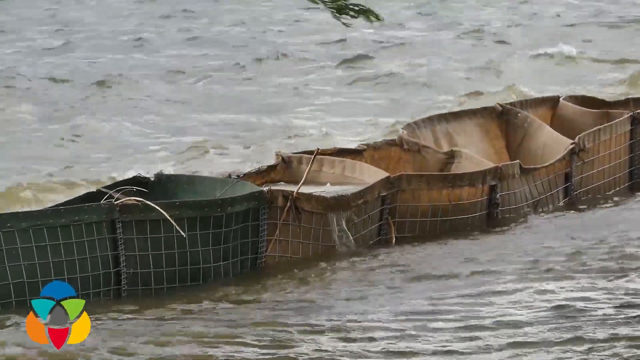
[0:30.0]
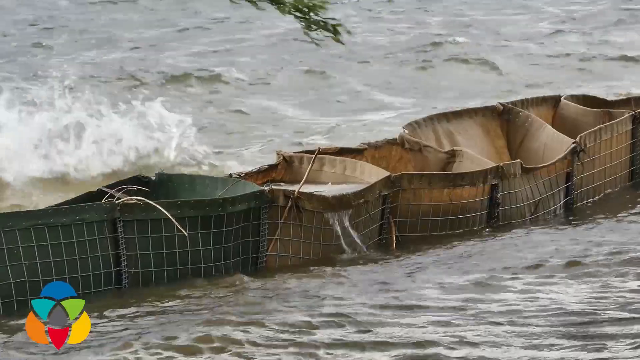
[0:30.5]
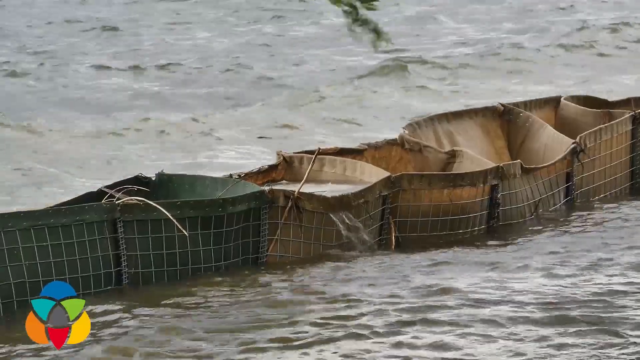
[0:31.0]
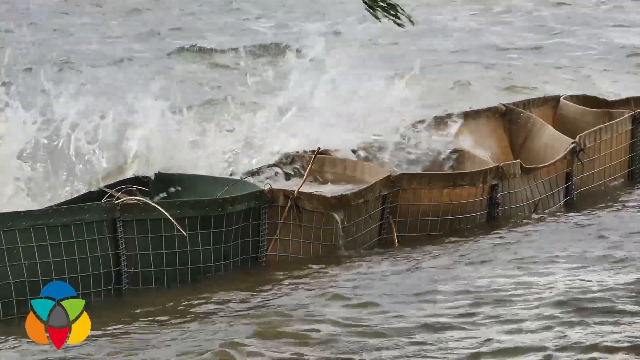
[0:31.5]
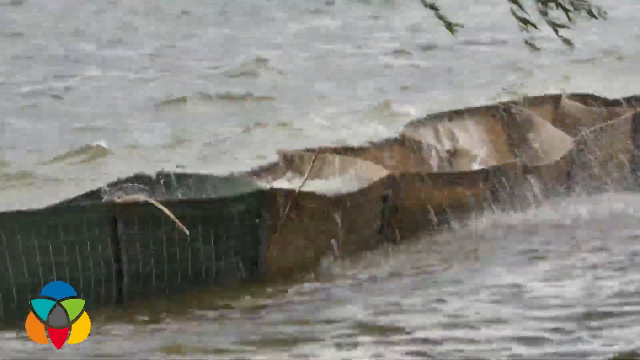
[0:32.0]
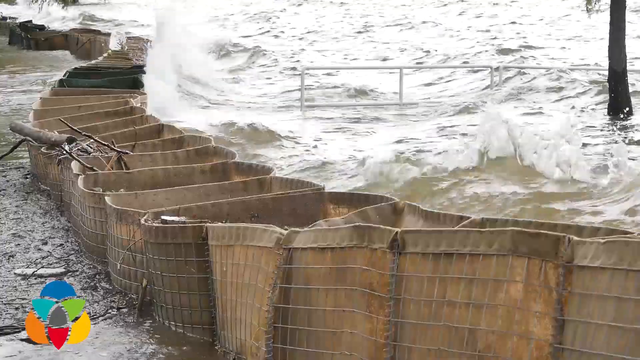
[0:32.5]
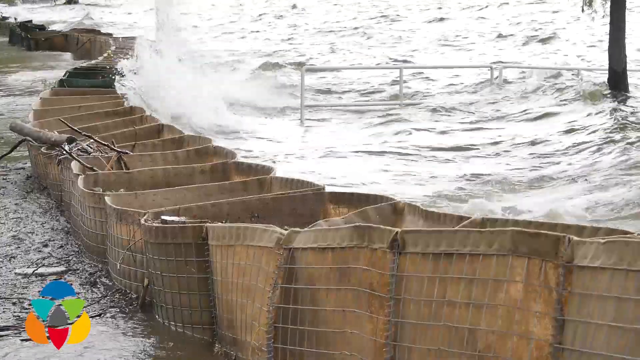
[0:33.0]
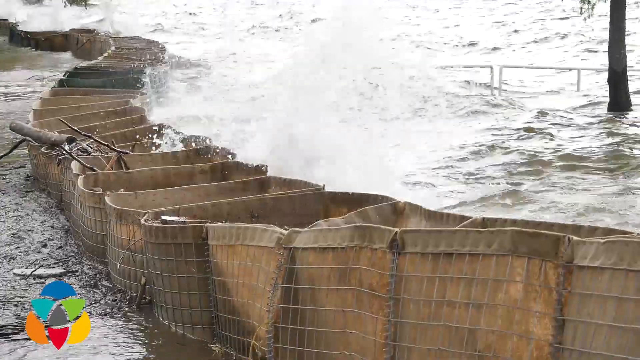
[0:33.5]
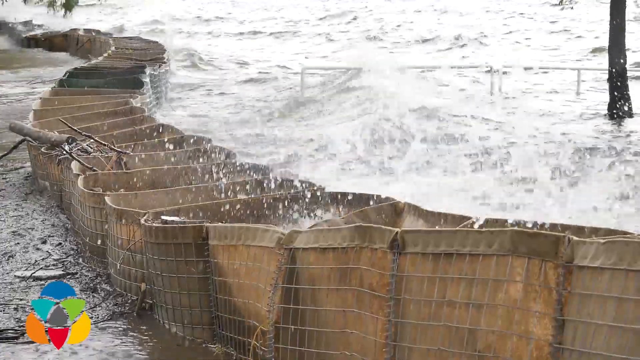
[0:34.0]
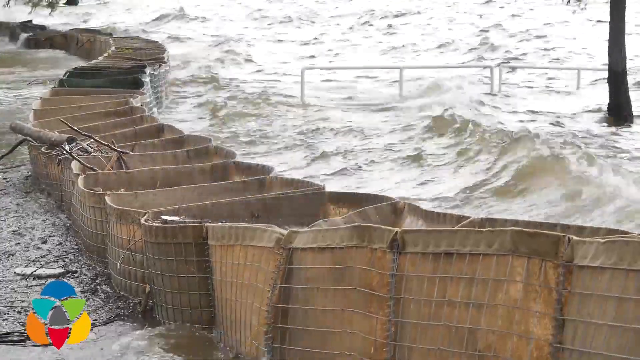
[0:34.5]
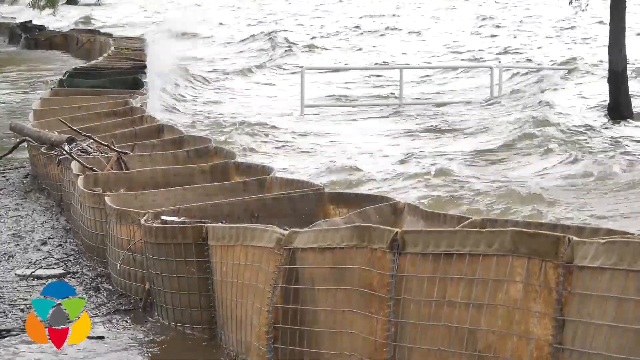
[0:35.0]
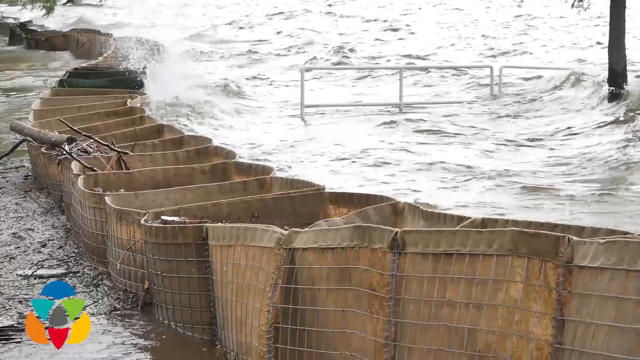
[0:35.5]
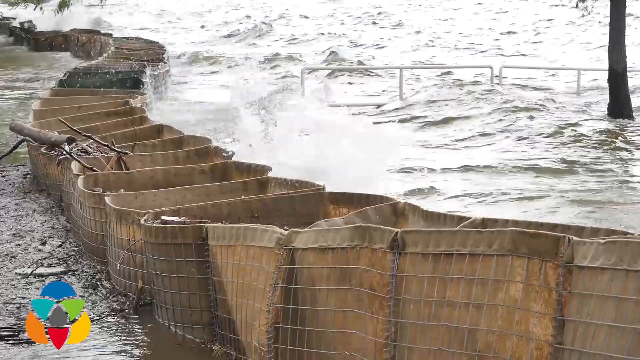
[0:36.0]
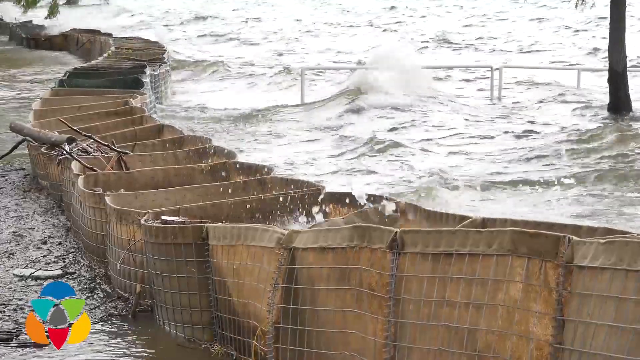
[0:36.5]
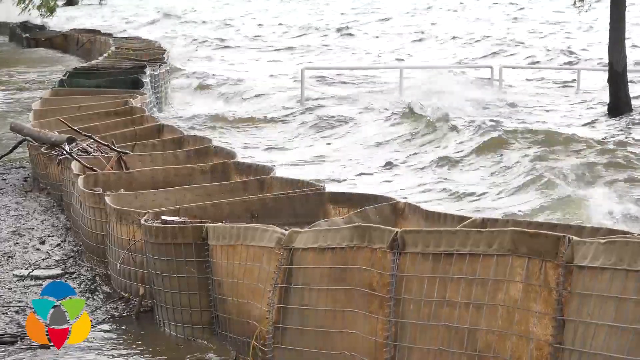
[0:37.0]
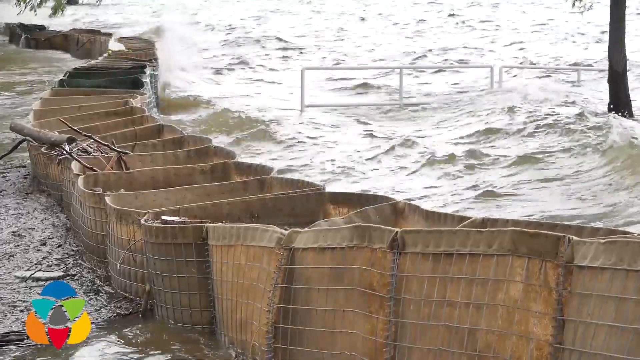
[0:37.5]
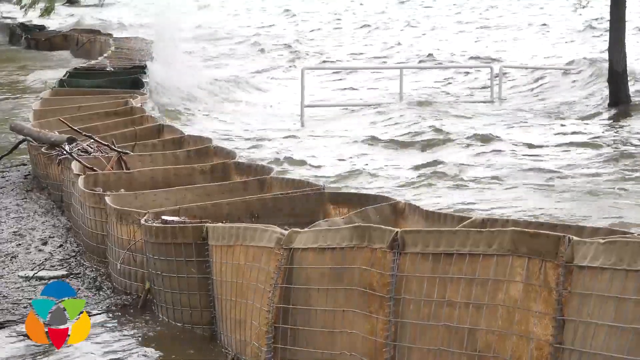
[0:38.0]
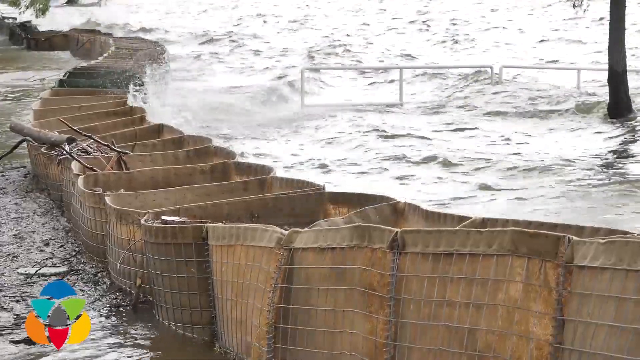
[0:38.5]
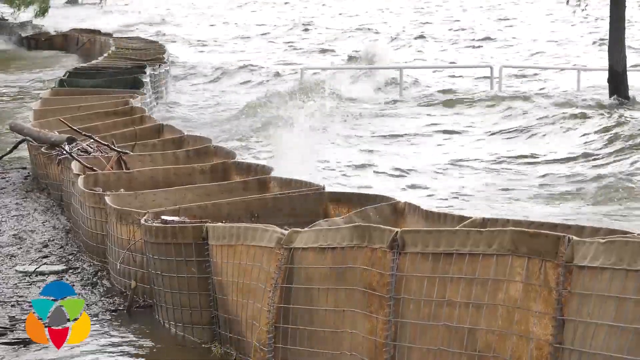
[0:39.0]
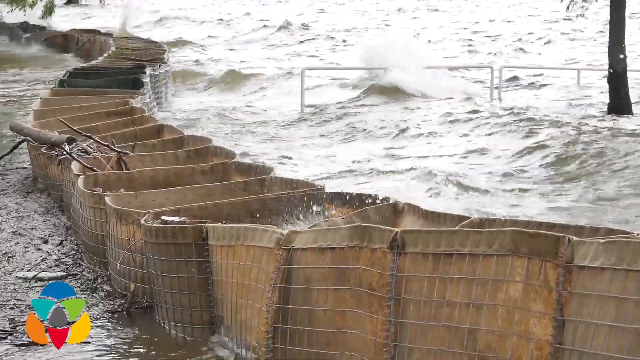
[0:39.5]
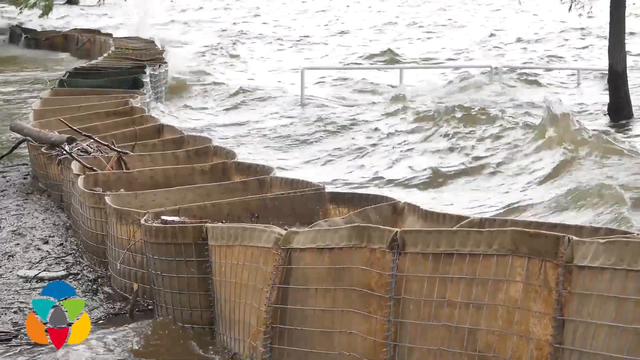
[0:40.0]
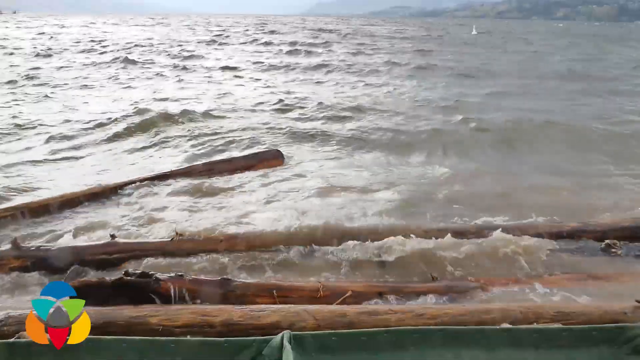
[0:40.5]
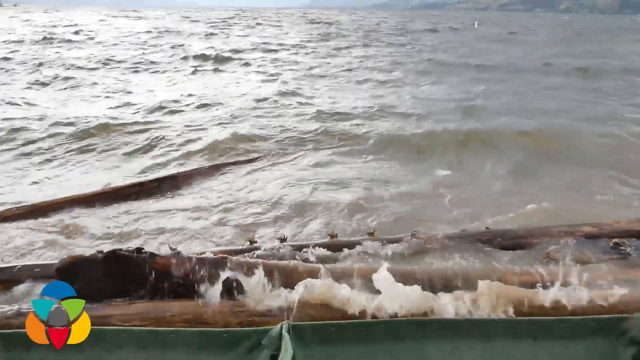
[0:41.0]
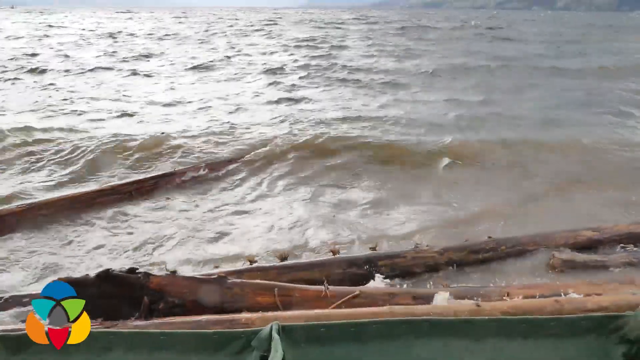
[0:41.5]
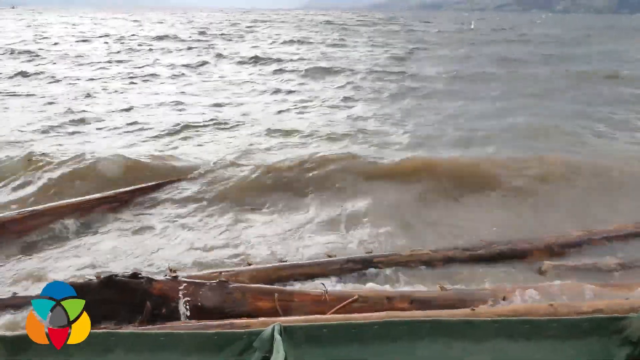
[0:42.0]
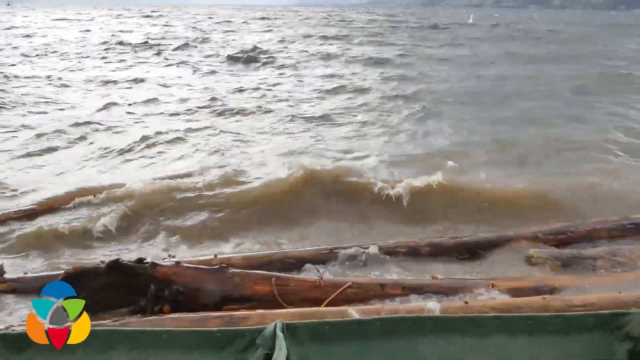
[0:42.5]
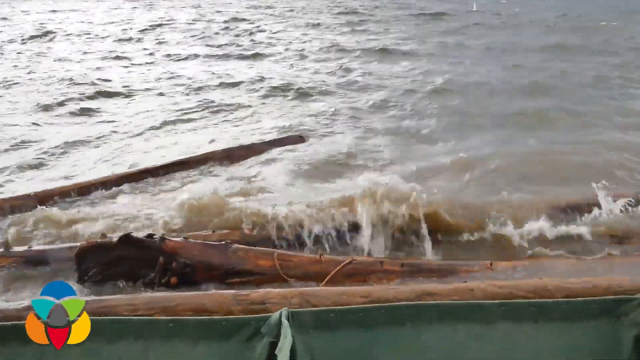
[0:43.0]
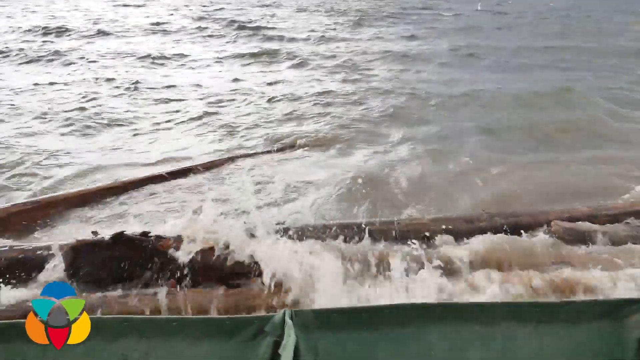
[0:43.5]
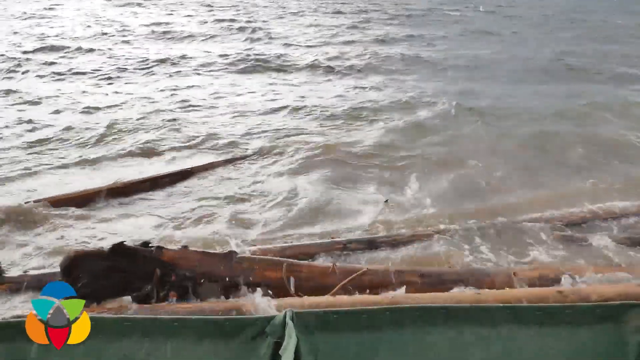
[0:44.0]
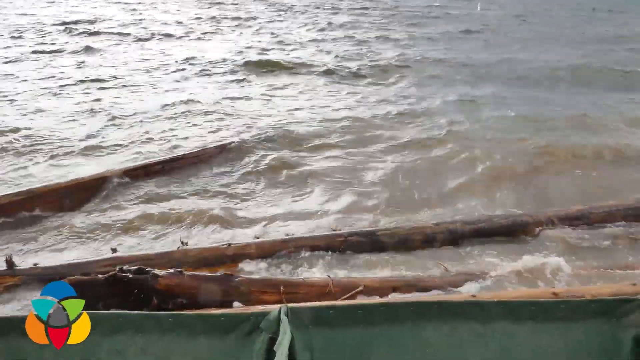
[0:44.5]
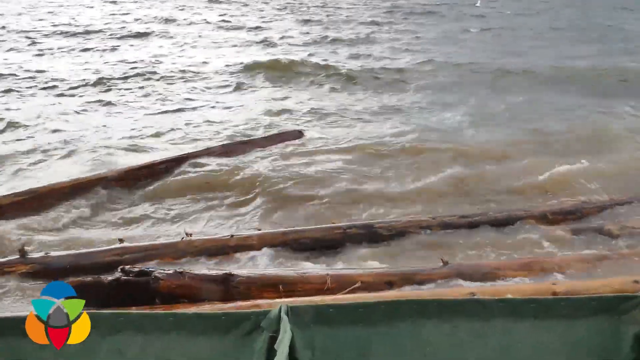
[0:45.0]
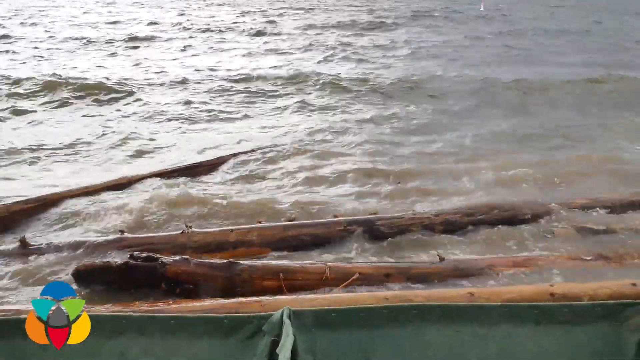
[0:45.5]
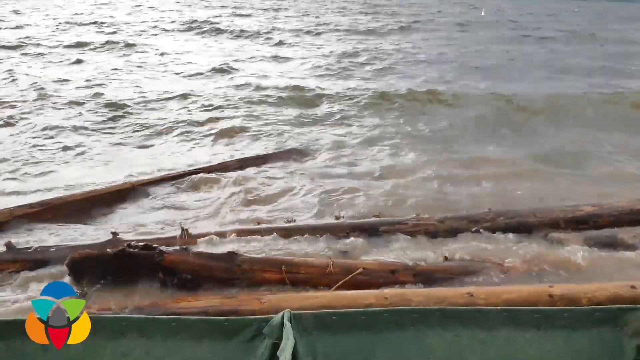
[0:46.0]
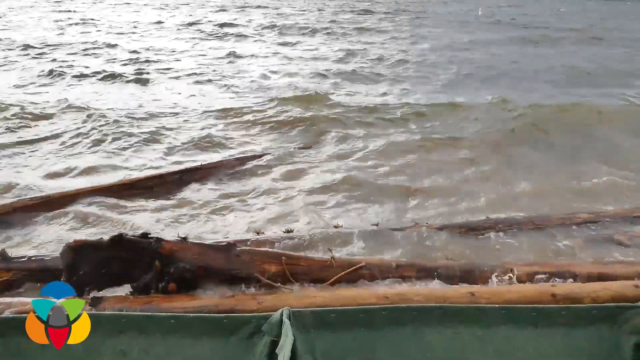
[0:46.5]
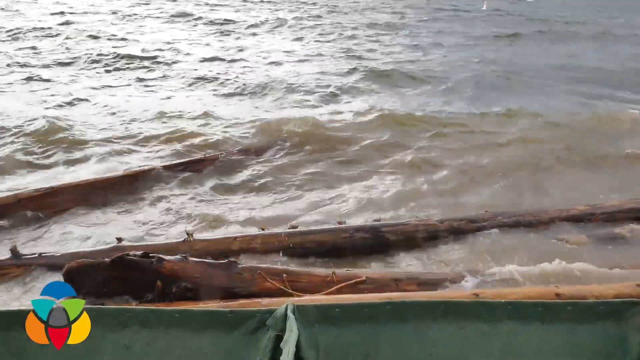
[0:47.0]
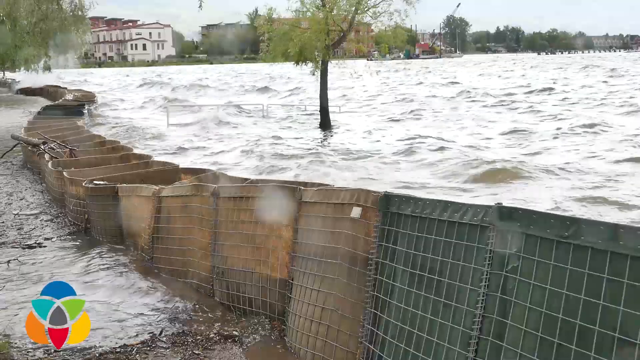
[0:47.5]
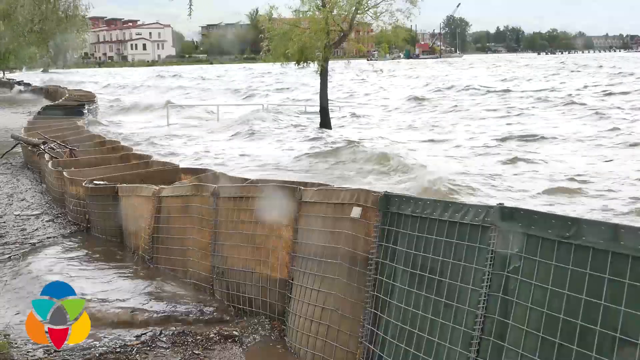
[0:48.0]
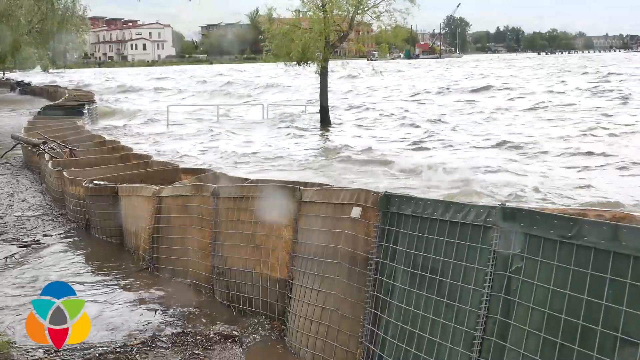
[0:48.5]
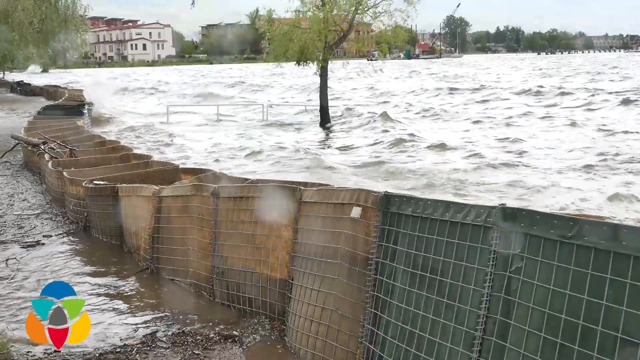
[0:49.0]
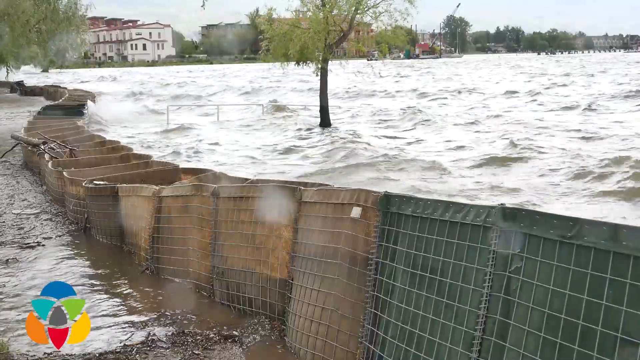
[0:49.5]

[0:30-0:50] A lot of water is shown, seemingly floods, with strong waves. A tree is being shaken by the wind, and a bird is also being shaken by the wind. A tree stands at the center of the water, and some tree logs float on the water. The water is dirty and not clear. At the far end are houses painted white. Something seems to keep water from entering the land. The sky is clear, but the far background is not clear; there are a lot of trees and some buildings.